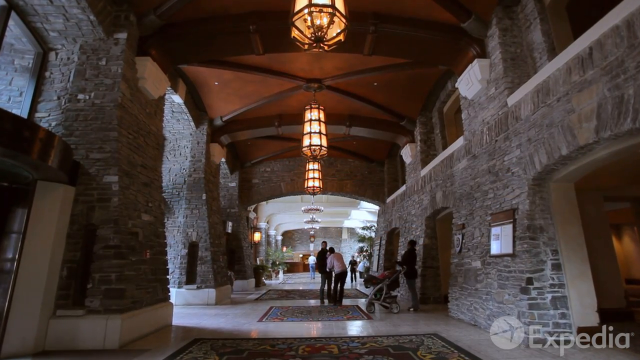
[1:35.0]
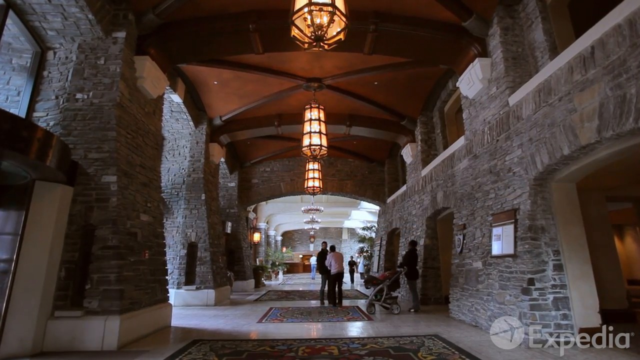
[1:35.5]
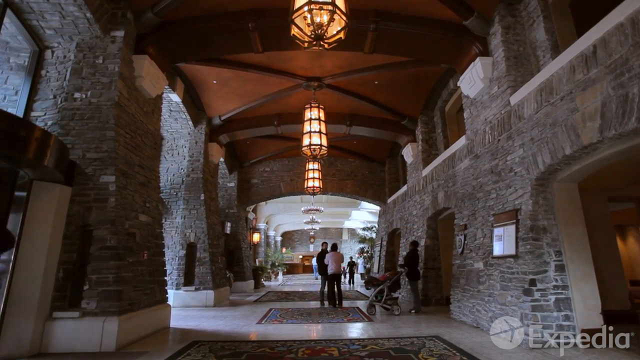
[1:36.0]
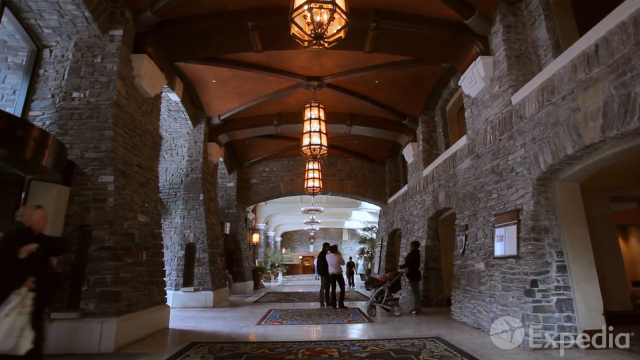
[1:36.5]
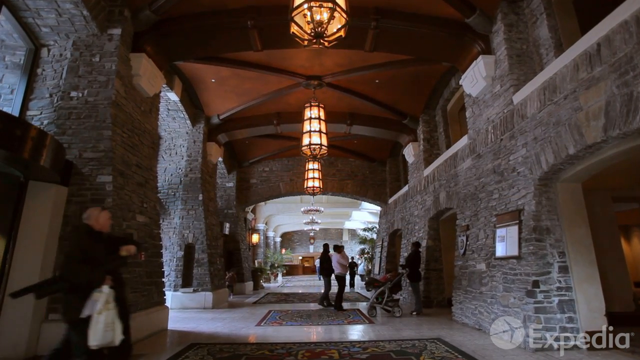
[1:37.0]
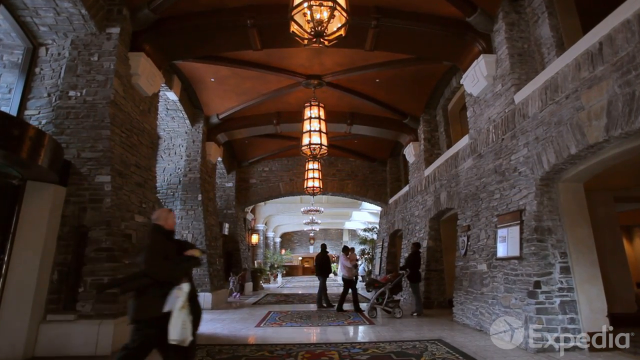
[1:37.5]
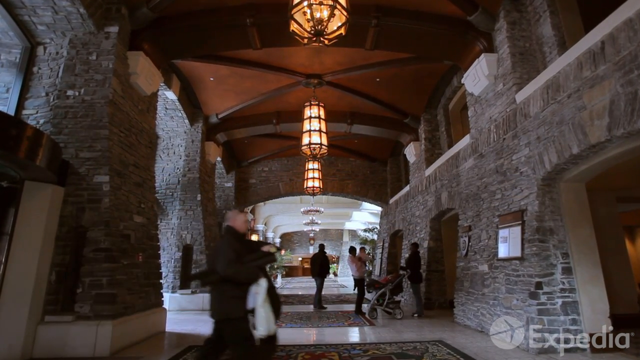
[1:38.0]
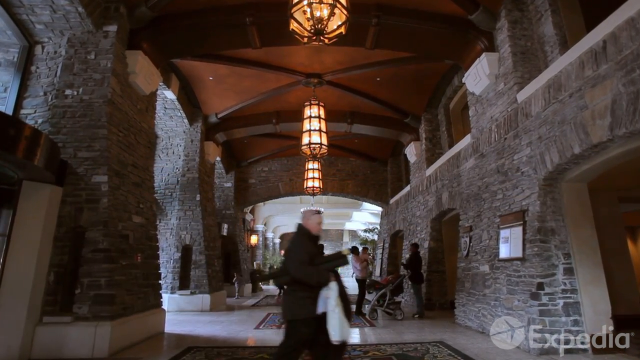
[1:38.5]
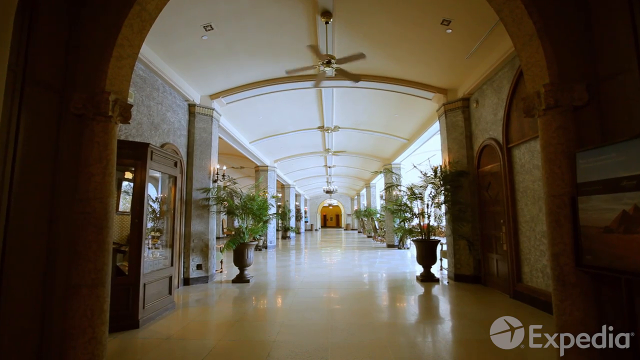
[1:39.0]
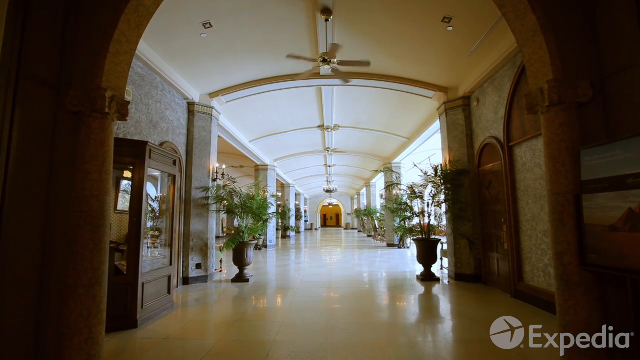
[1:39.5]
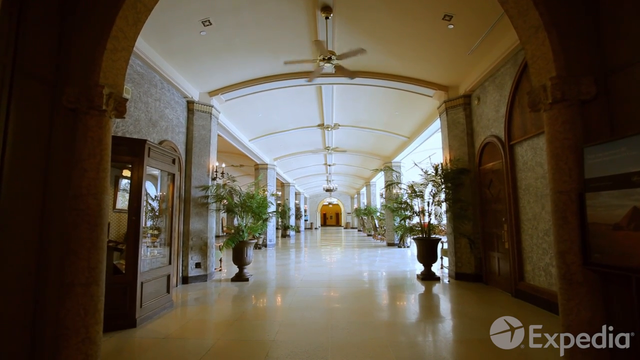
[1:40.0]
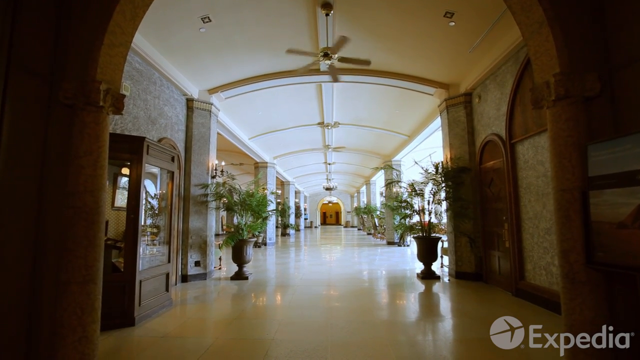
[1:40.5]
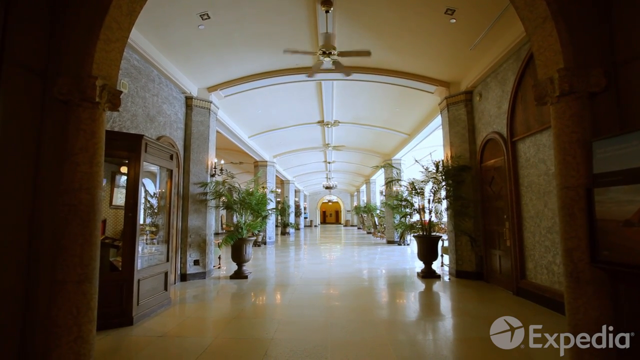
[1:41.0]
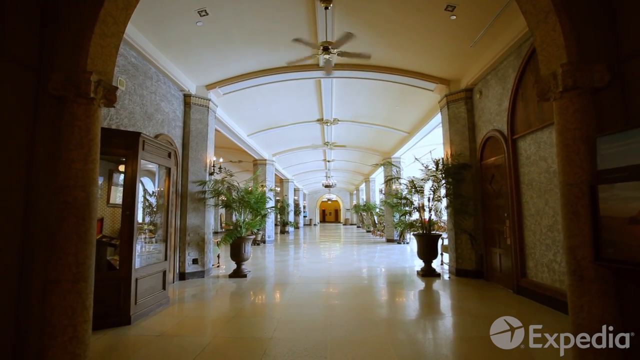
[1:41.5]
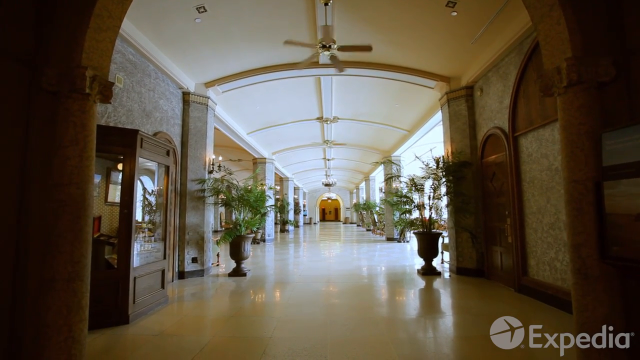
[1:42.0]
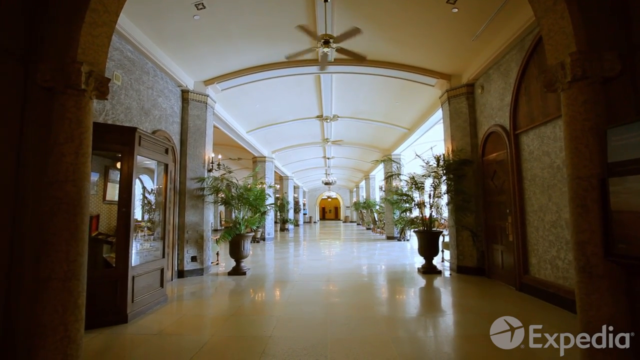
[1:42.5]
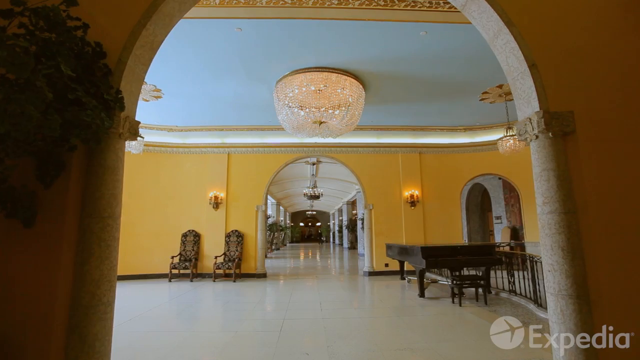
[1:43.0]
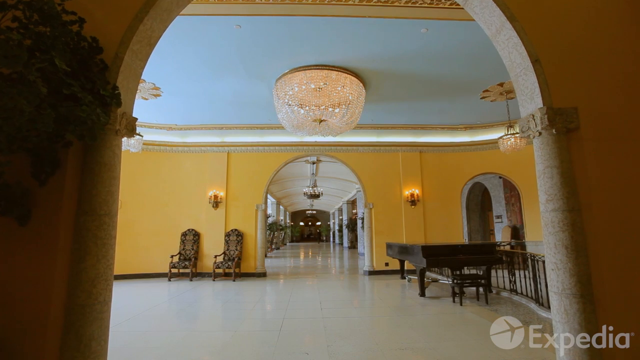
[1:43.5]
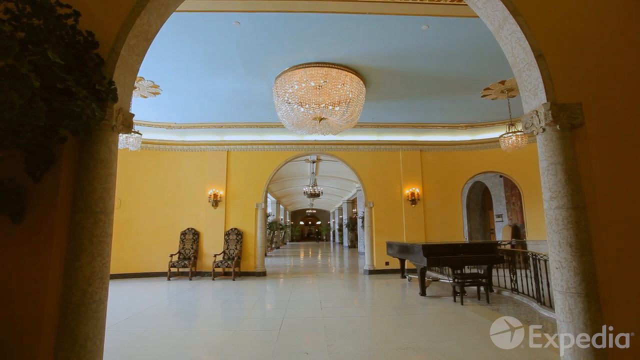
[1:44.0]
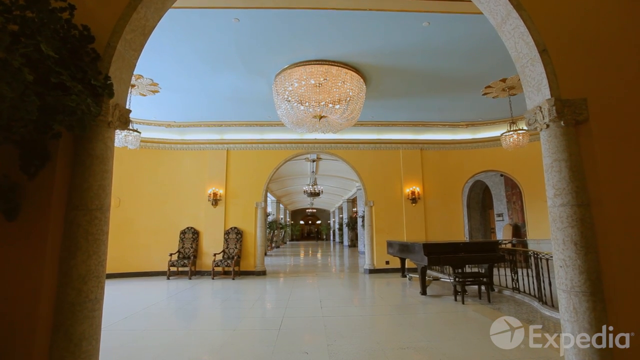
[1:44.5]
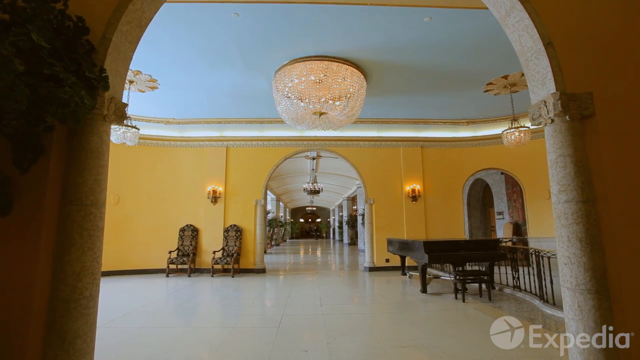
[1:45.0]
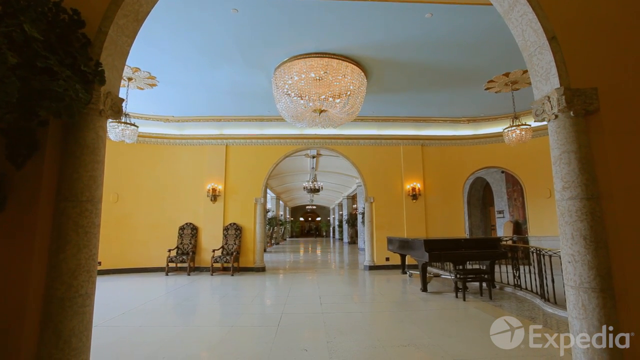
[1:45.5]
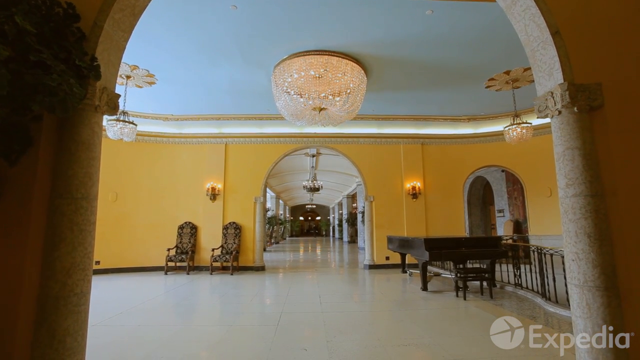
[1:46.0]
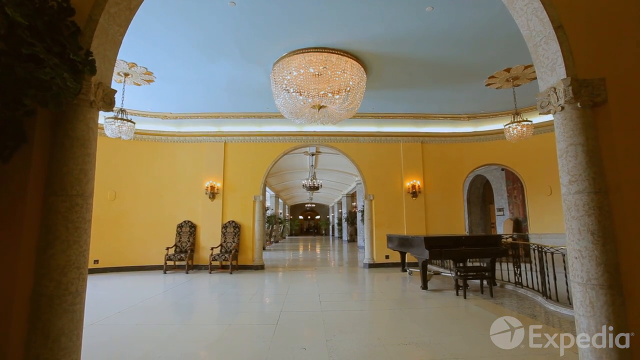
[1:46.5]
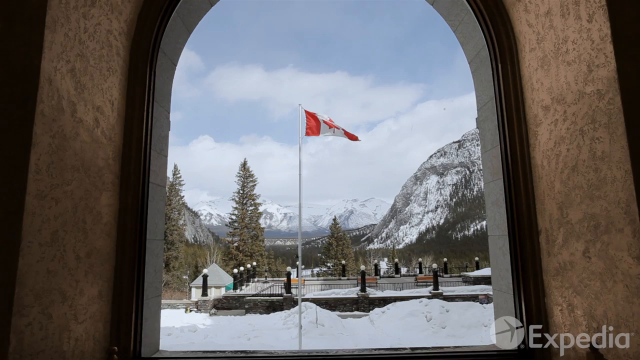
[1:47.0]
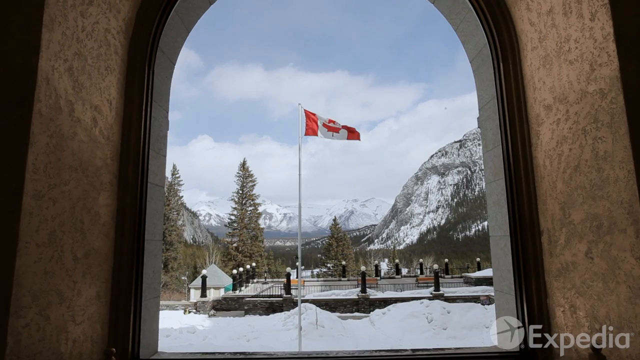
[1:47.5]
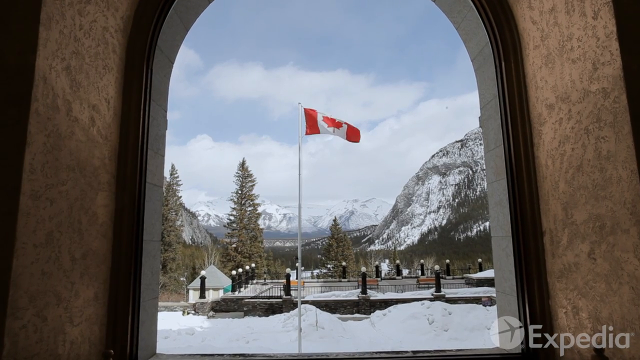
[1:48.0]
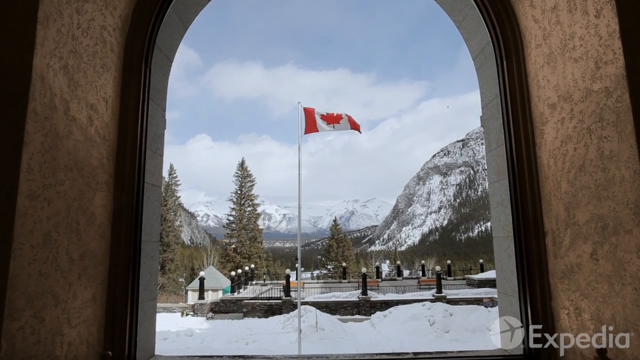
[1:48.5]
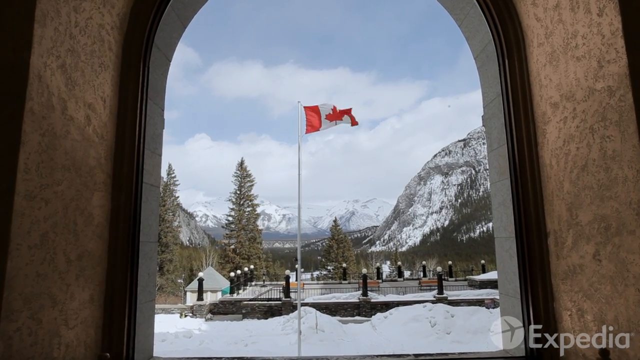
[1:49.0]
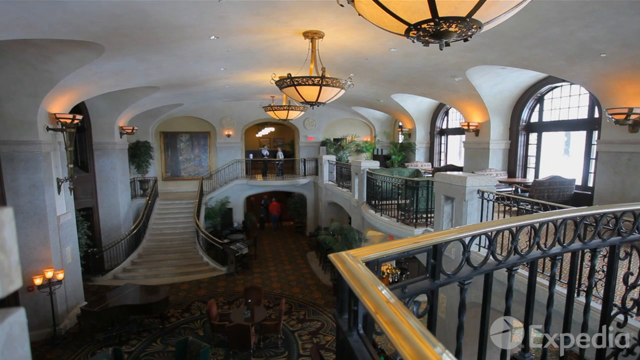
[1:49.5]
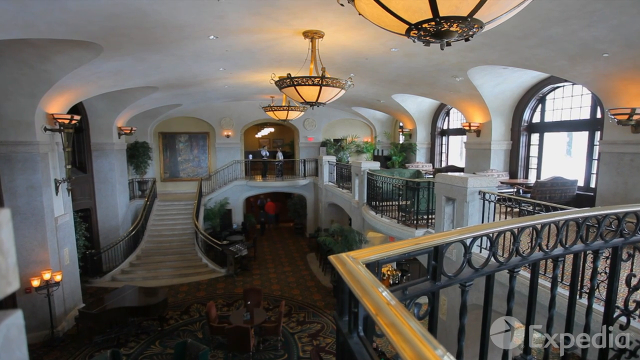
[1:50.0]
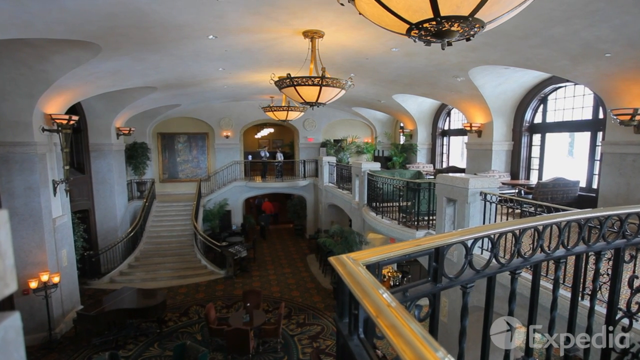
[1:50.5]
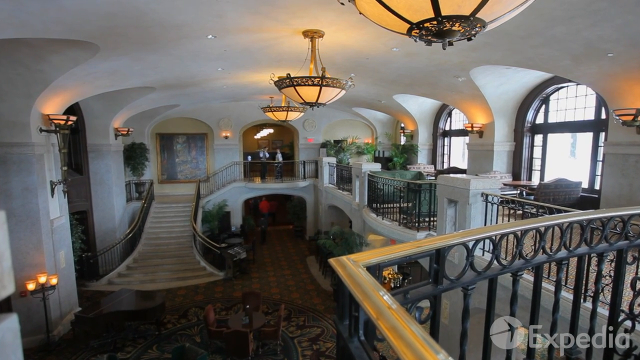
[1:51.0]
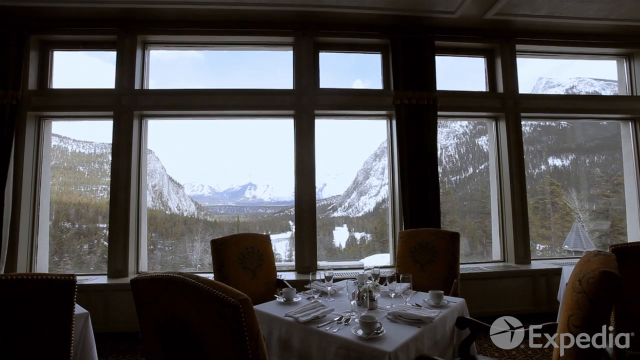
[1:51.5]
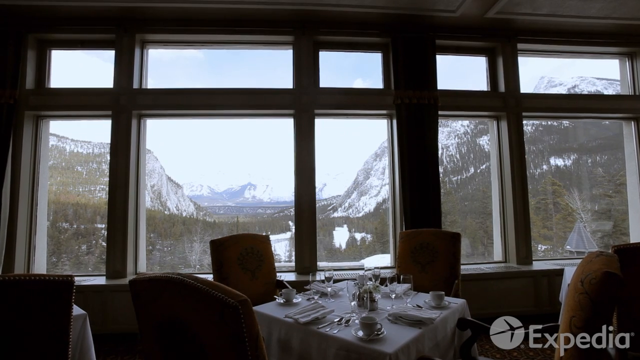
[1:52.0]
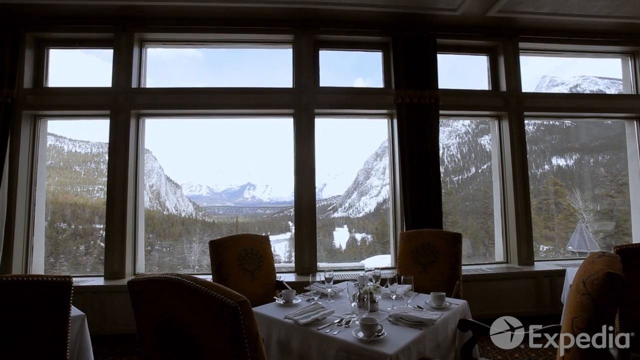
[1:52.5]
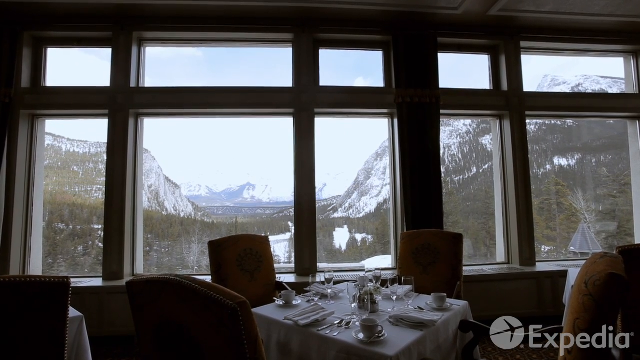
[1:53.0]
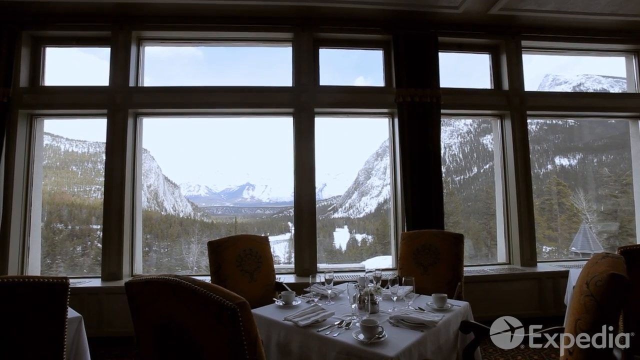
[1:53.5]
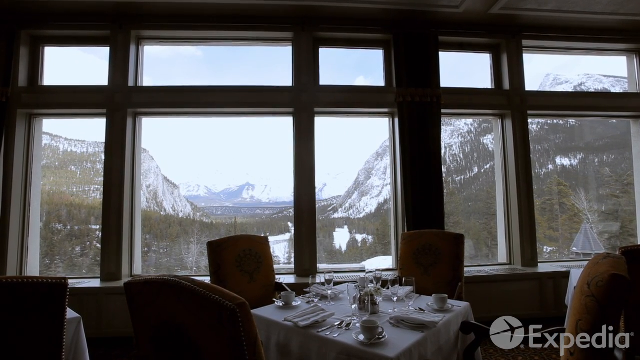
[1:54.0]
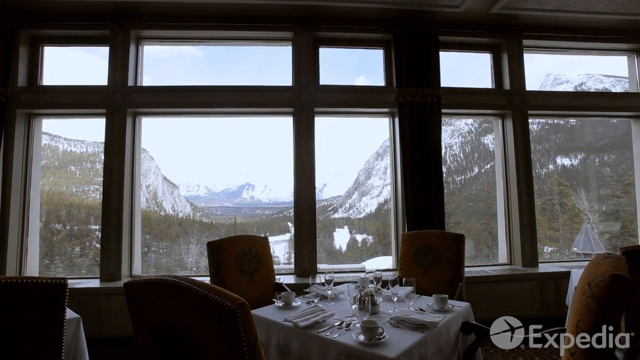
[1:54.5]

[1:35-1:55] People are in the hallways, and more people are walking into and around the building. The next shot is a very large hallway with fans on the ceilings, plants lined on each side, a lot of natural lighting and tiled floors. Next is another large room with yellow walls, a piano to the right and two chairs to the left, a couple of lights on the walls, lighting hanging from the ceilings, and an archway. Then there is a shot of an archway with a Canadian flag right in the middle. Next is a shot from the second floor, with lights on the ceilings and a large staircase in the background, with a big piece of artwork hanging on the wall behind the stairs. Finally, a scene shows a few windows with dining tables in front of them and a view of the mountains and trees.